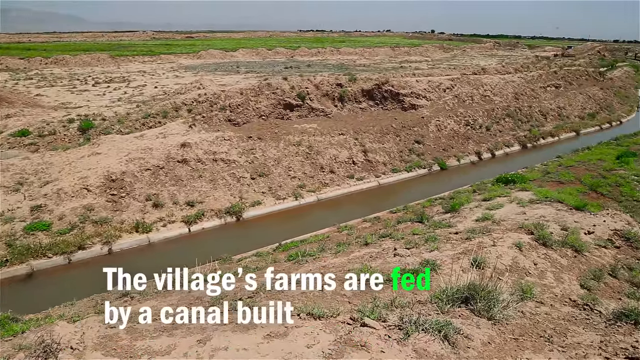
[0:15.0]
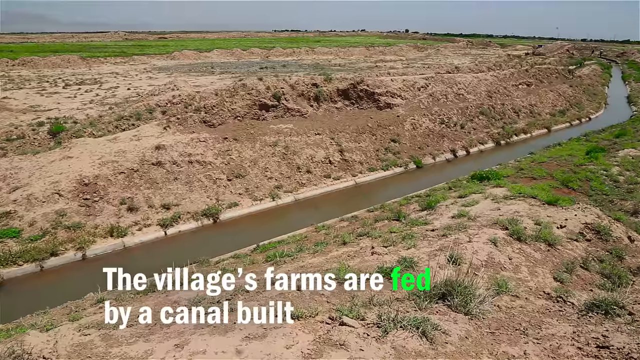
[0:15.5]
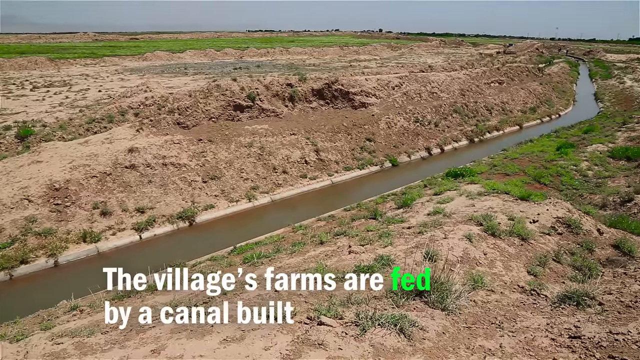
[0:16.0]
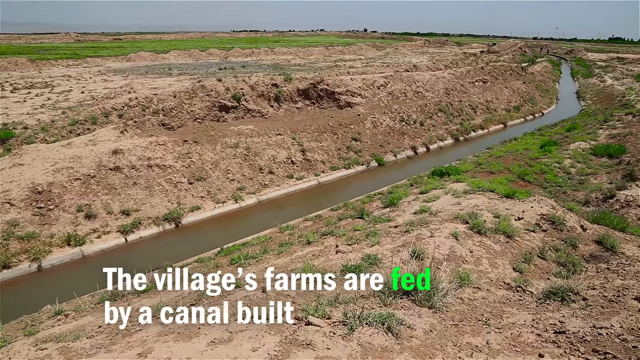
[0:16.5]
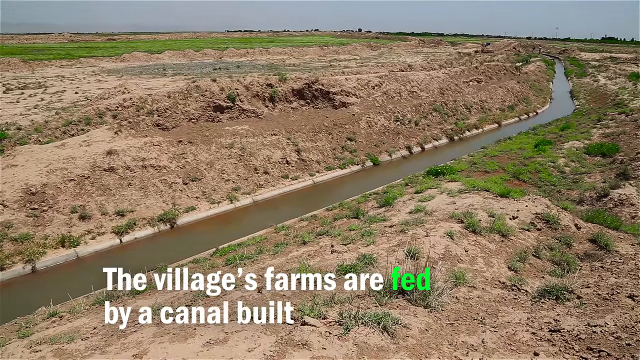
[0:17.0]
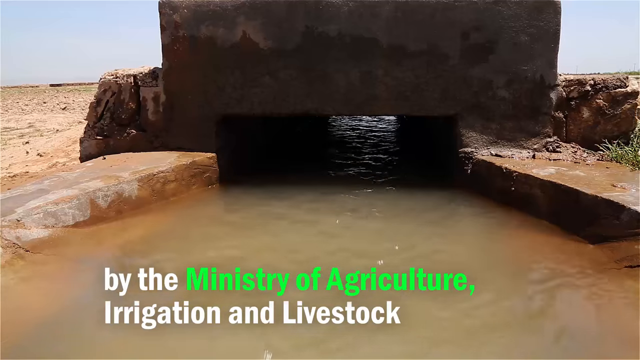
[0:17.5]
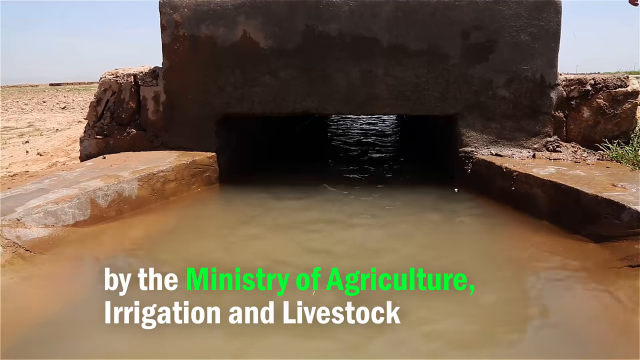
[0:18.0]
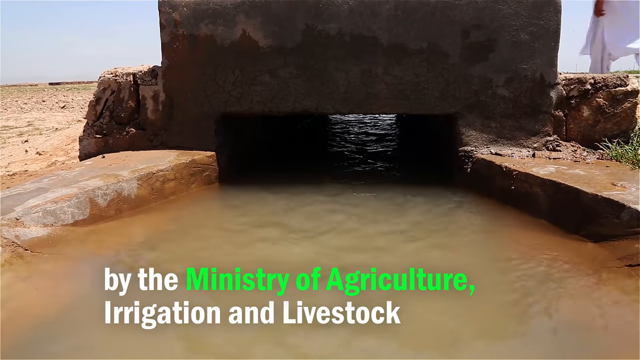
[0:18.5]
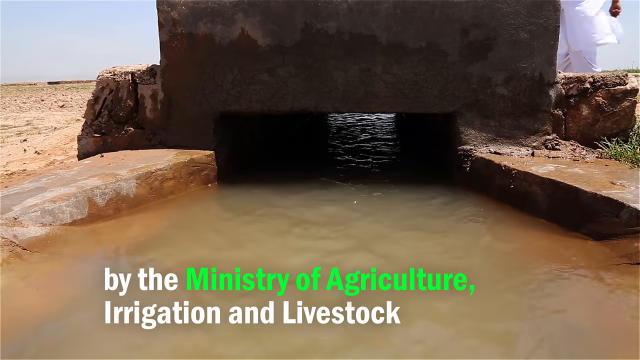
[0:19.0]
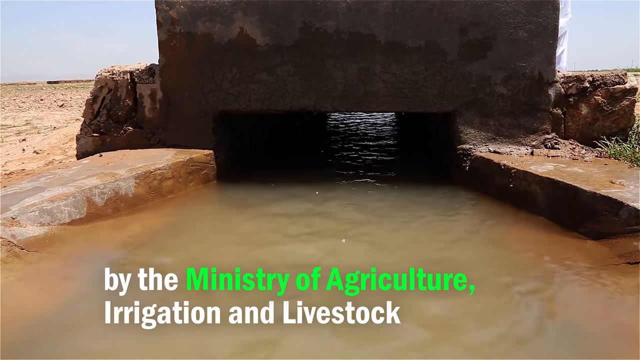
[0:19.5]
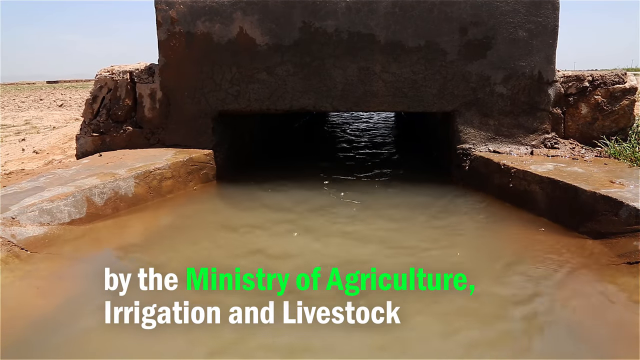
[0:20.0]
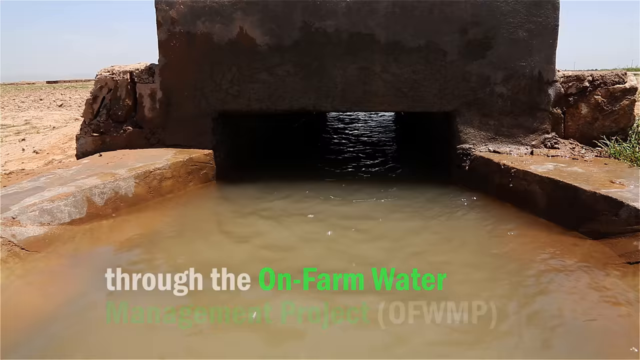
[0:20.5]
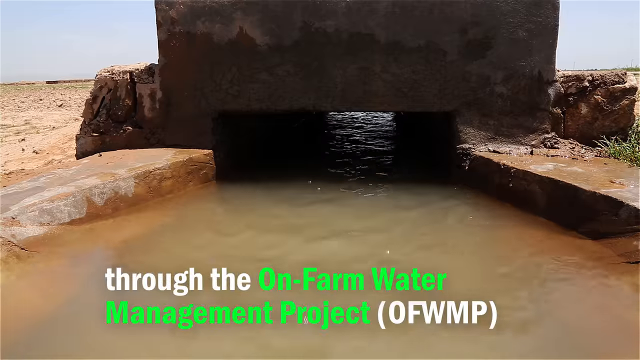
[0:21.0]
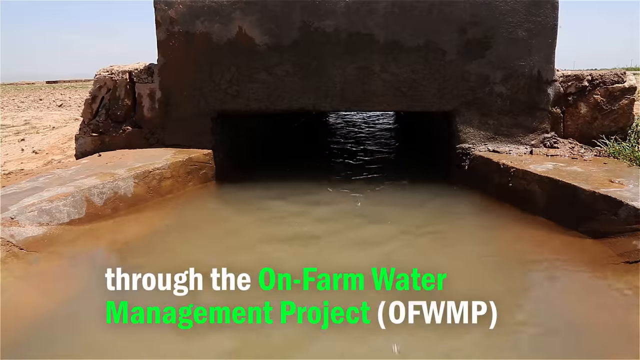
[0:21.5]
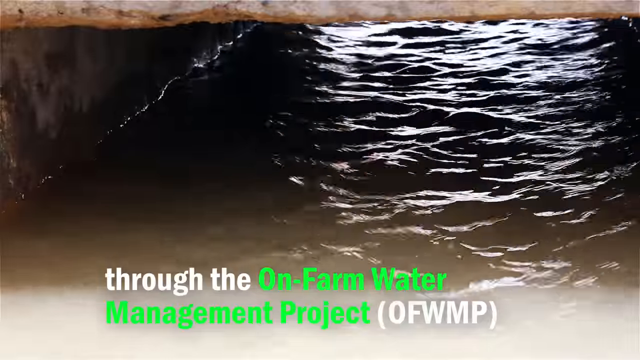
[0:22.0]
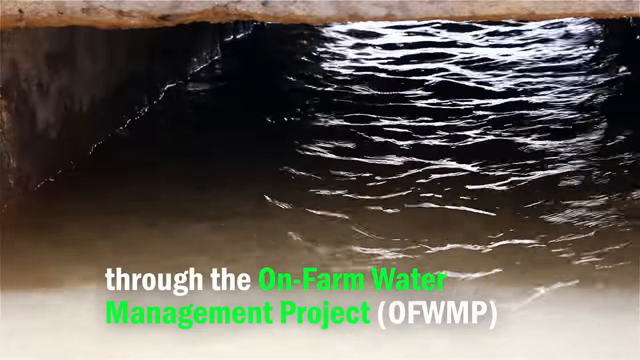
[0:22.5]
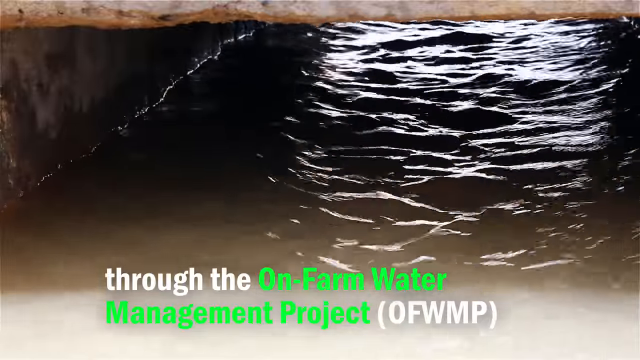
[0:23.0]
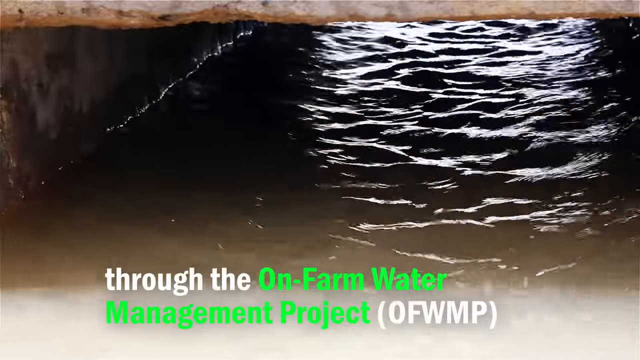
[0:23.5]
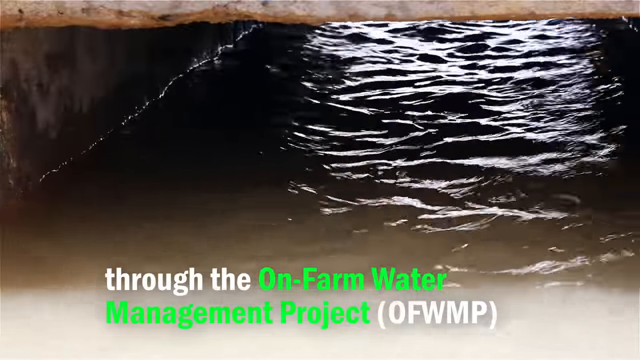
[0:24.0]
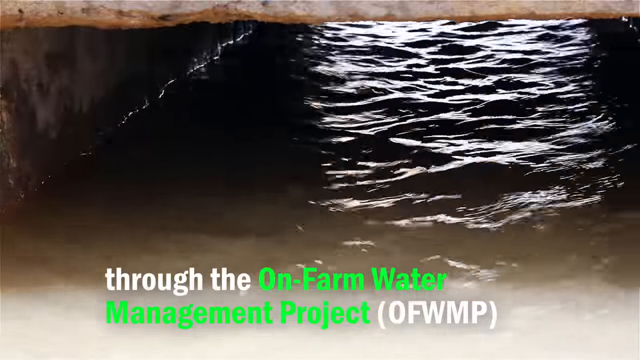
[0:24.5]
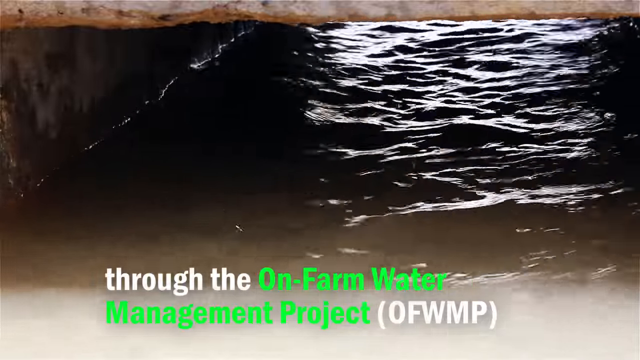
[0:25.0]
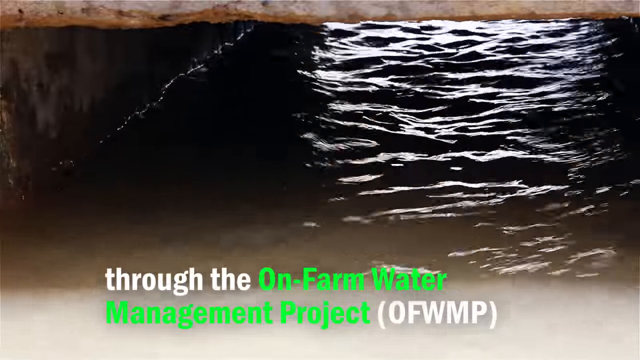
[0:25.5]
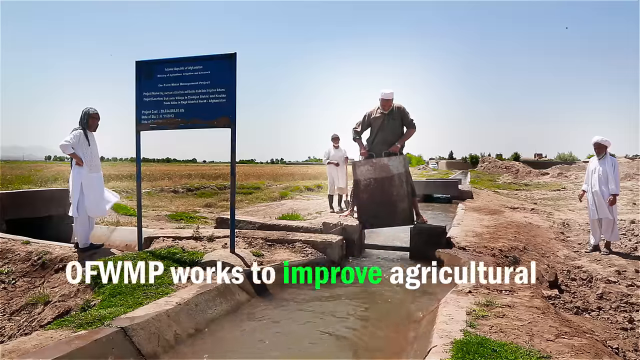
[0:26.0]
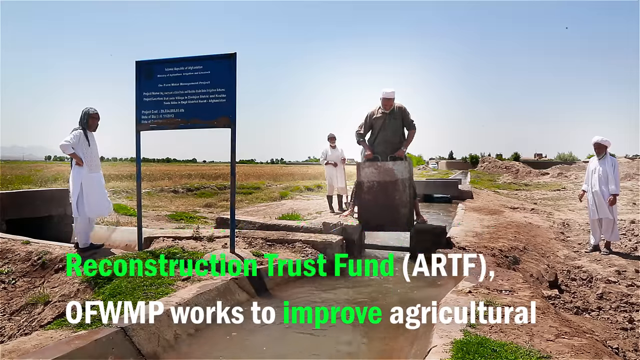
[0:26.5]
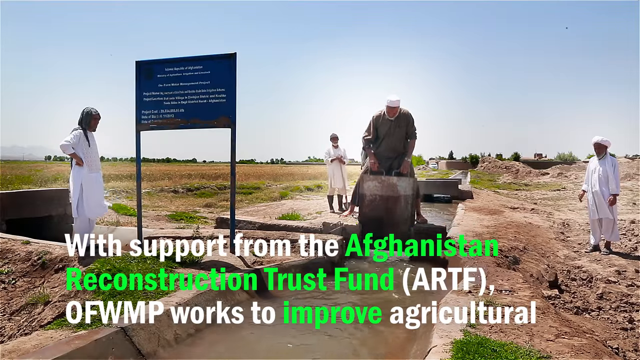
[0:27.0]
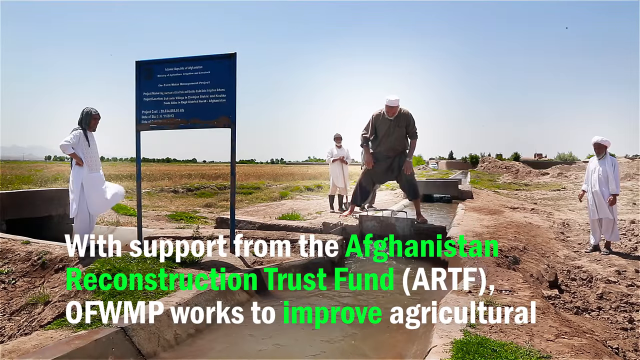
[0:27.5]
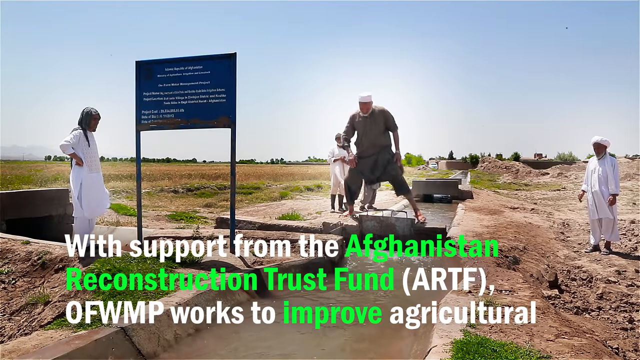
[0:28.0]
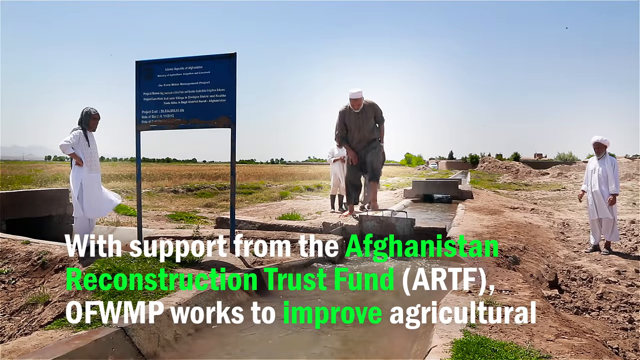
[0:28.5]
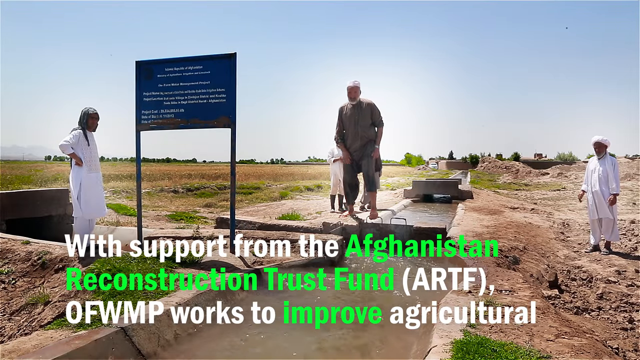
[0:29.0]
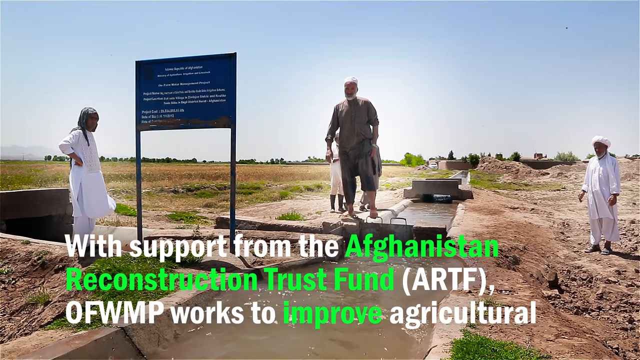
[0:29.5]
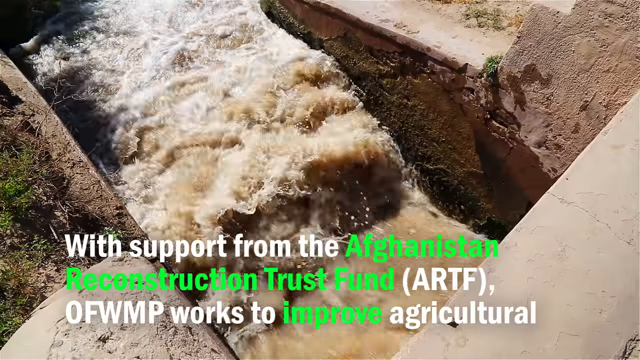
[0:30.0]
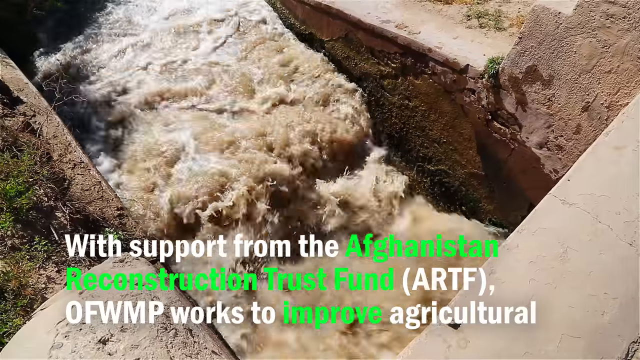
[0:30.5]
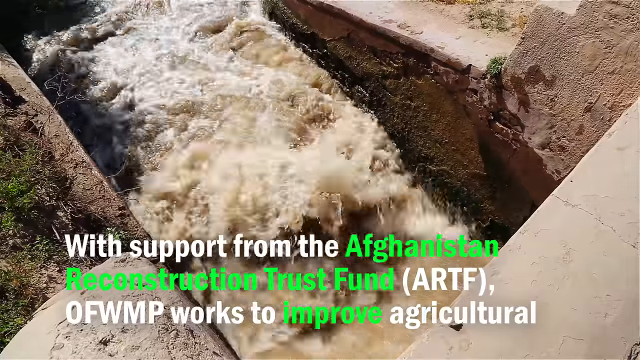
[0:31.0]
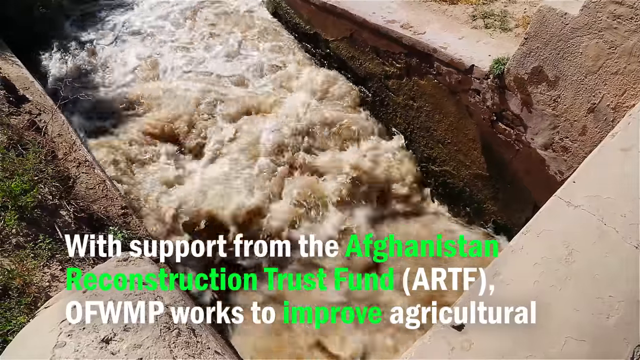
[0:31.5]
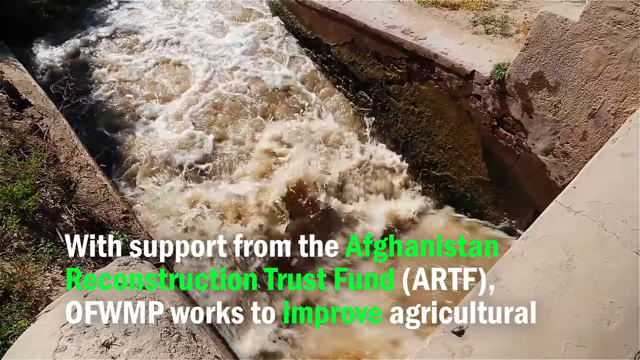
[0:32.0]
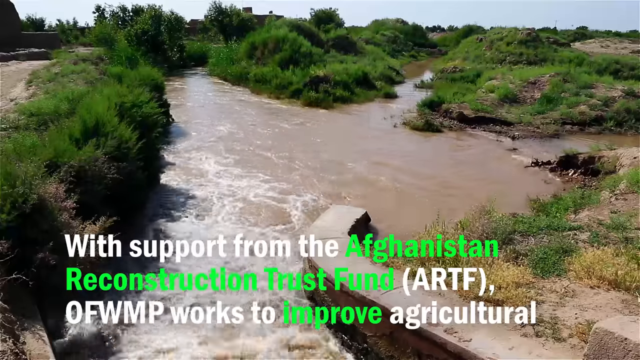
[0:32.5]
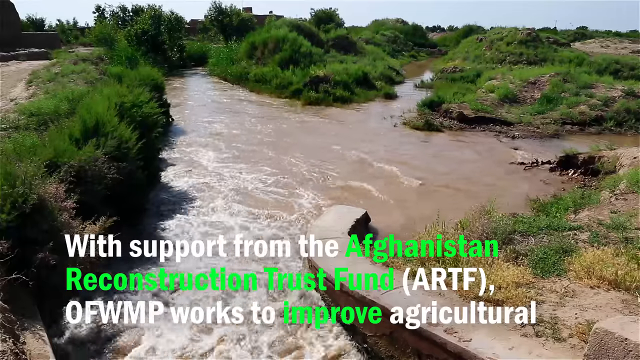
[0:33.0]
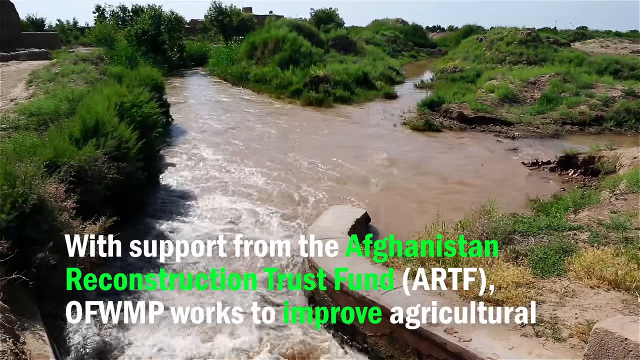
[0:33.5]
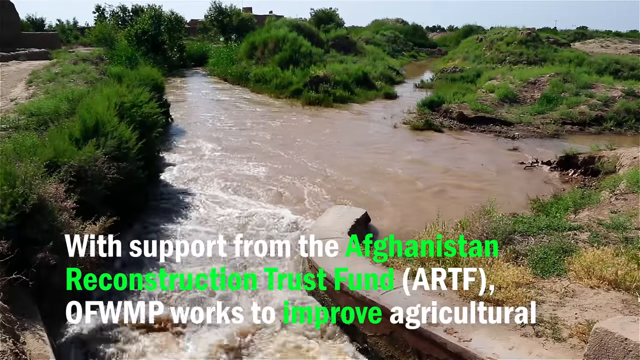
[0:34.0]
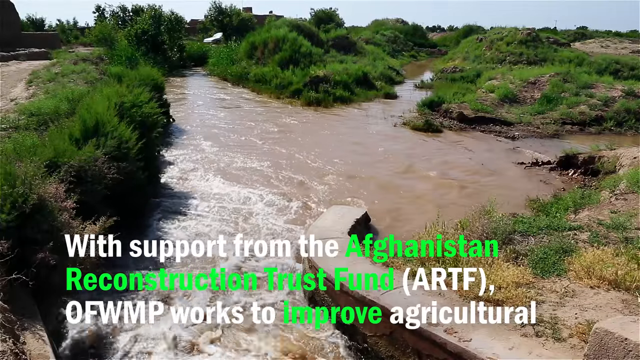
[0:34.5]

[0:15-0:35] The camera pans over the canal, showing an arid, dry landscape that is mostly brown and dusty, with a few sparse green patches here and there. Brown water runs through the canal, which looks fairly man-made, with unnatural, very straight angles and a corner that cuts to the right side. On-screen text reads "the village's farms are fed by a canal built through the on-farm water management project. (OFWMP)". Different angles show the water going through the canal, and it seems to pass under a covered, rectangular, tunnel-like shape. Then a wide-angle shot shows four people: three of them wear white religious or cultural long-sleeved robes and white caps, and one man in the canal lifts up what looks like a barrier, which falls and slides down, cutting off the water.